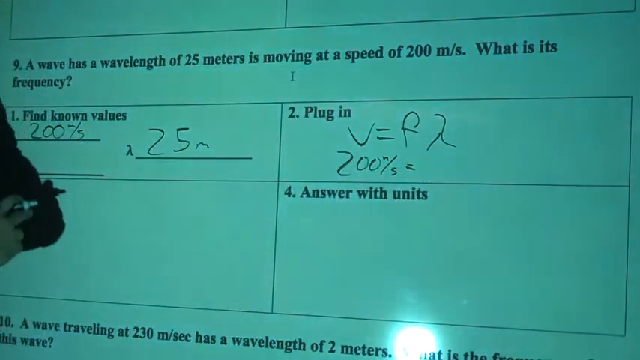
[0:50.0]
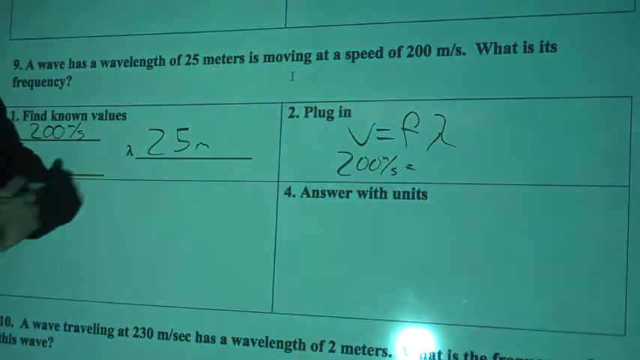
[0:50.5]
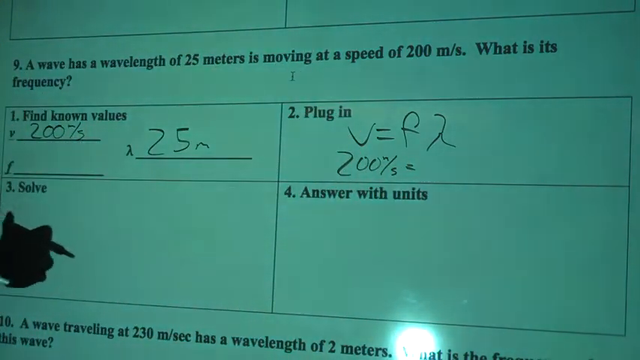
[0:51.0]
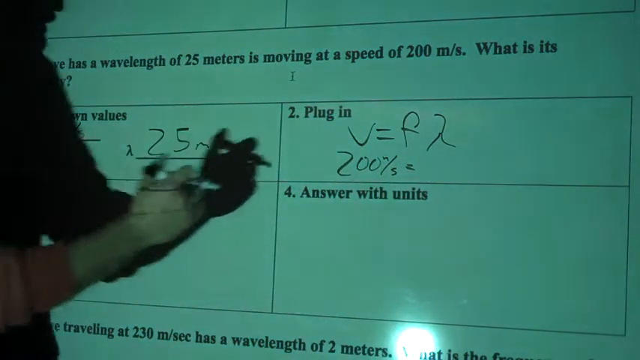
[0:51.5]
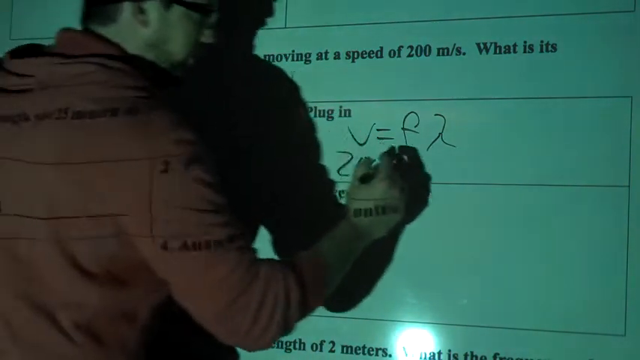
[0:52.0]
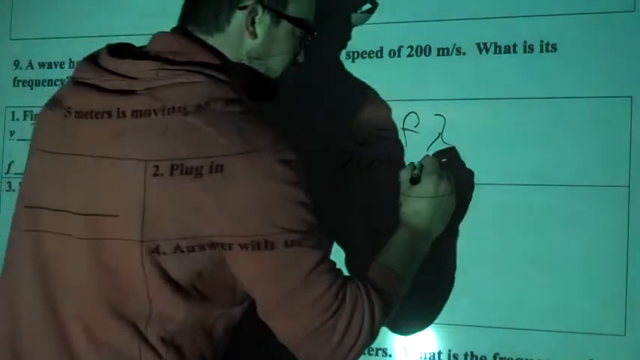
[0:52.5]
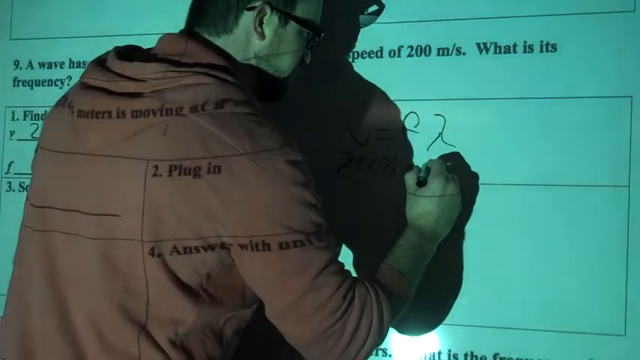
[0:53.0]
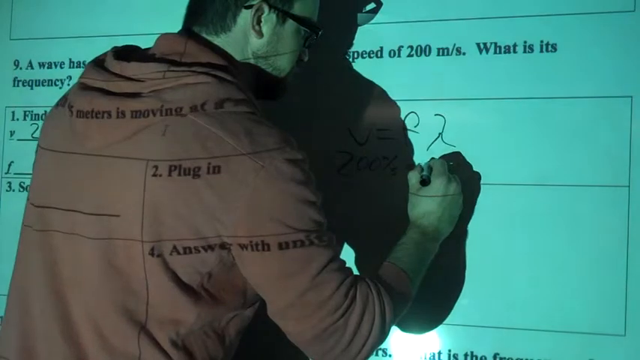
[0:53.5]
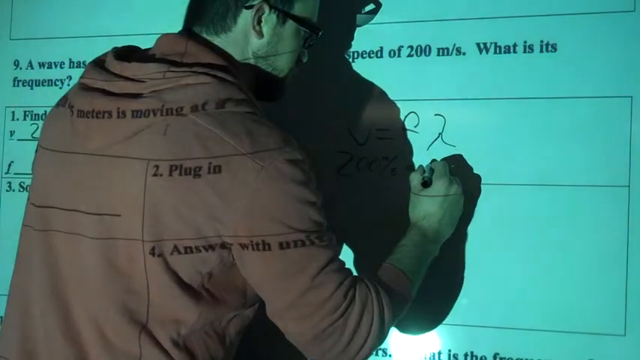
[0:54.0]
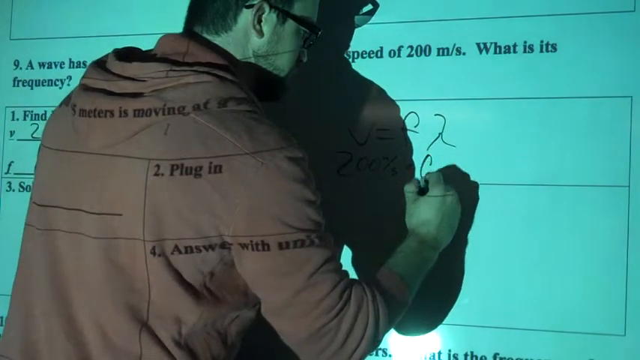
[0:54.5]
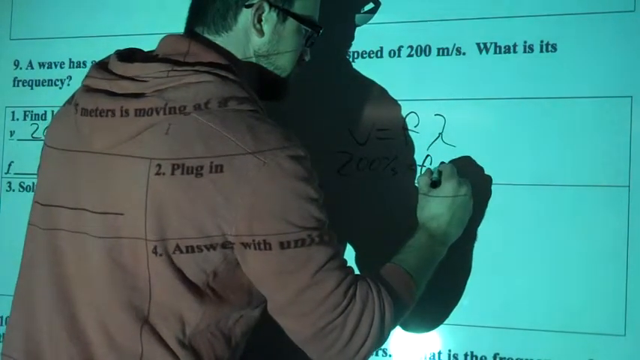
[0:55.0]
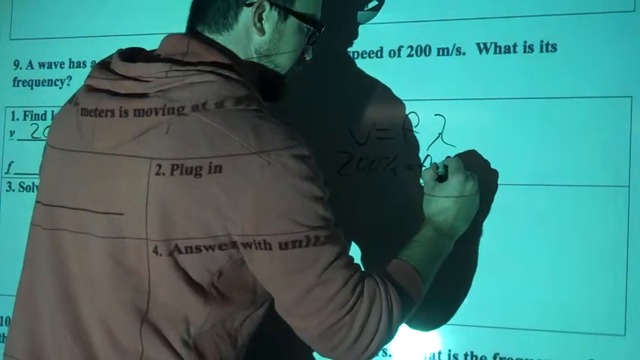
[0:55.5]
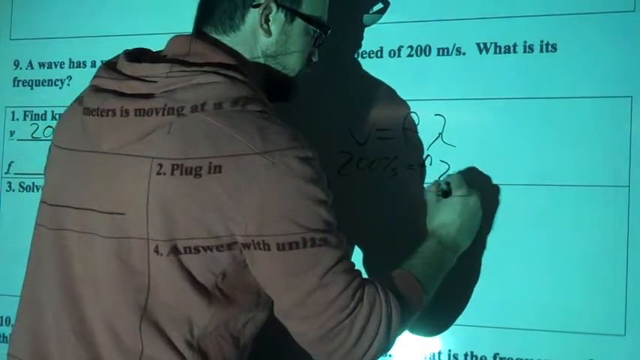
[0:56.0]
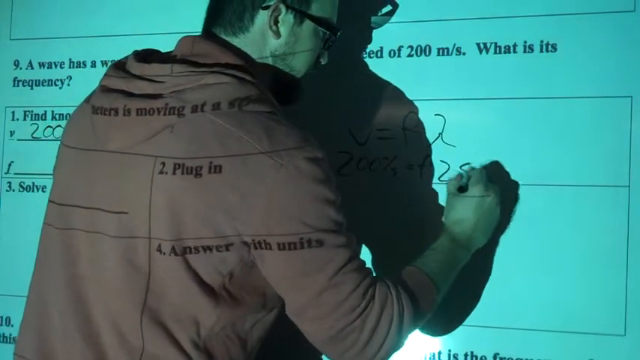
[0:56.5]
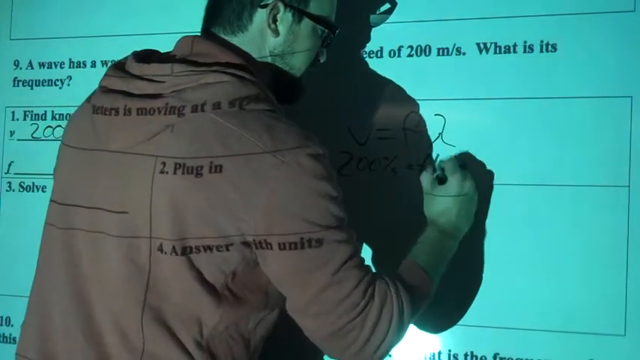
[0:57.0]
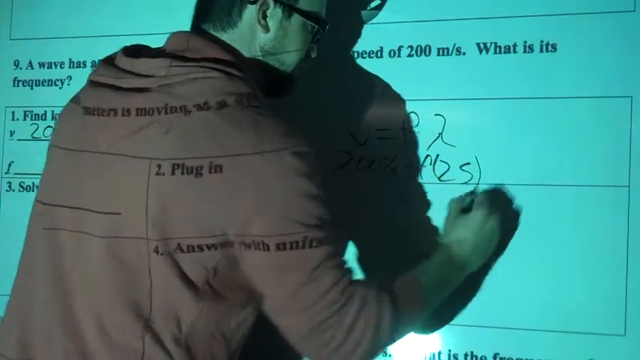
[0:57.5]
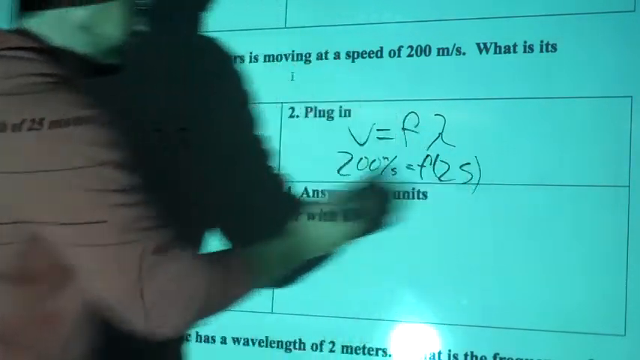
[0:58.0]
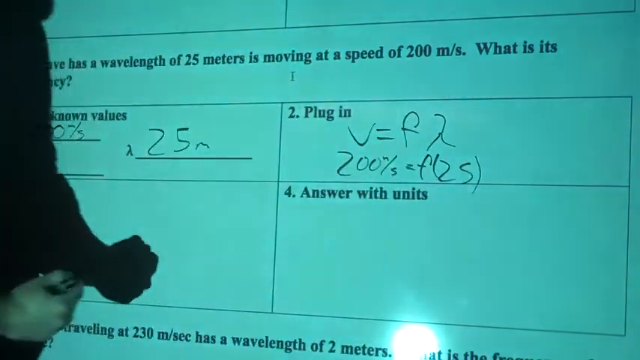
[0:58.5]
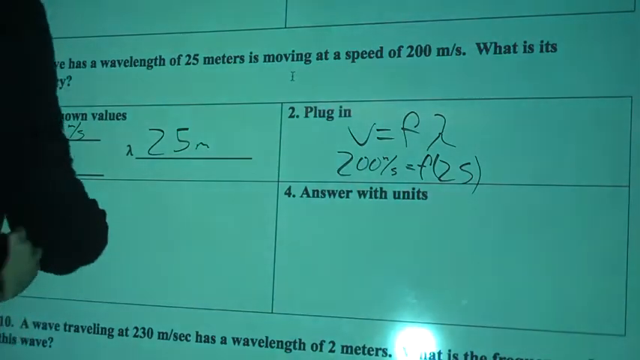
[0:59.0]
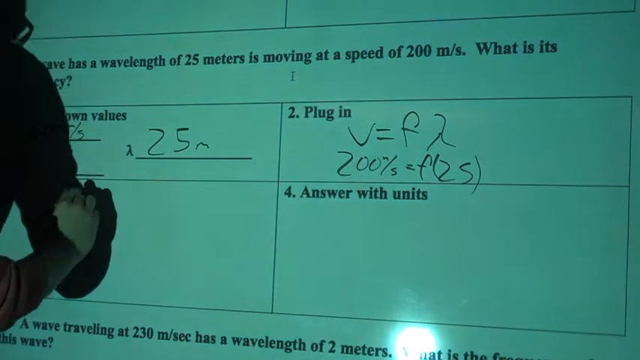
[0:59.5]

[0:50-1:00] The professor continues from "200 miles per second," writing that it equals F followed by what looks like 25 in parentheses. As the shot ends, he looks like he is about to move on to the third part of the question. The screen has the same green look, and the camera has not moved. The professor appears to be wearing a red vest.